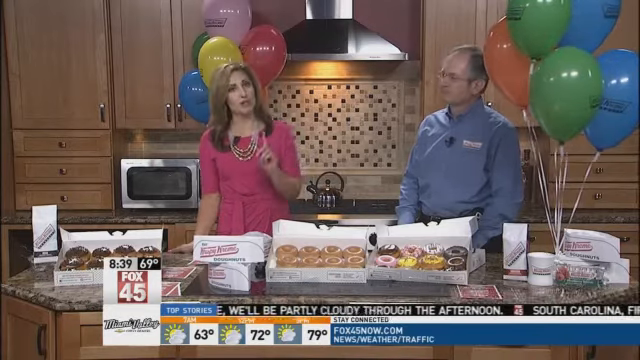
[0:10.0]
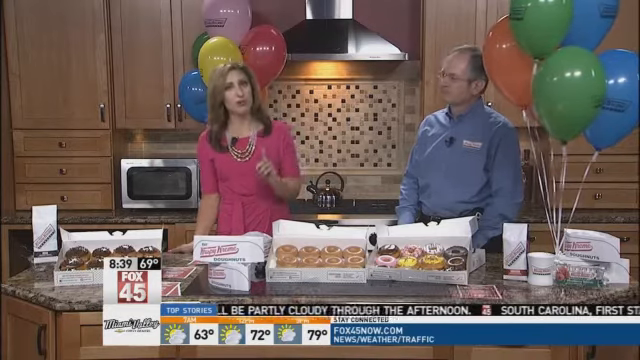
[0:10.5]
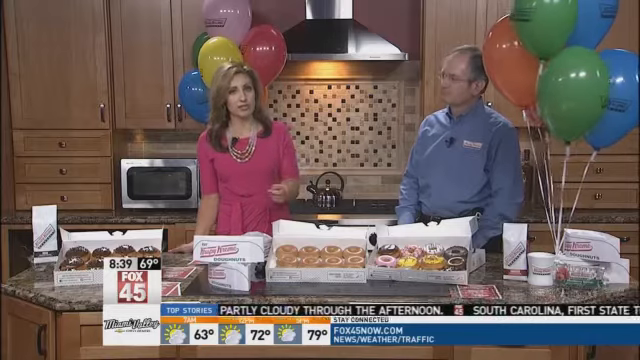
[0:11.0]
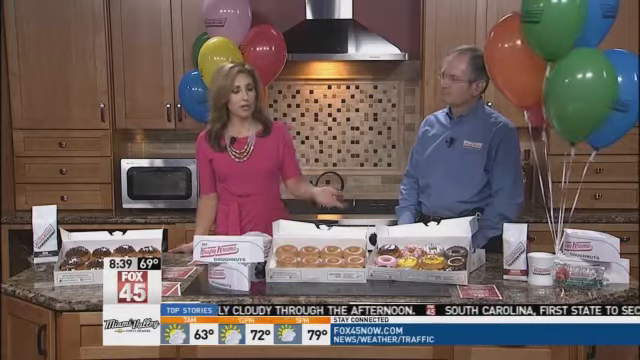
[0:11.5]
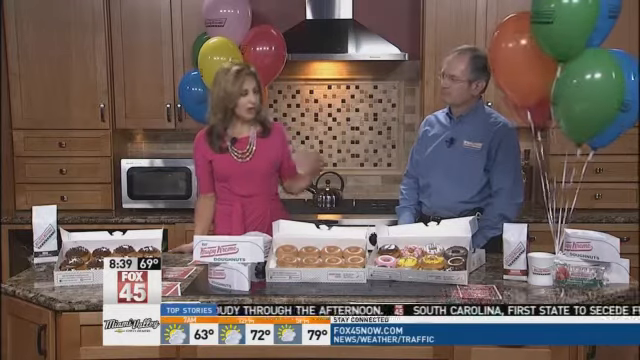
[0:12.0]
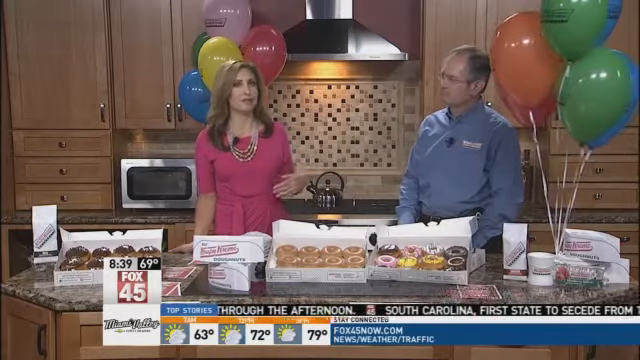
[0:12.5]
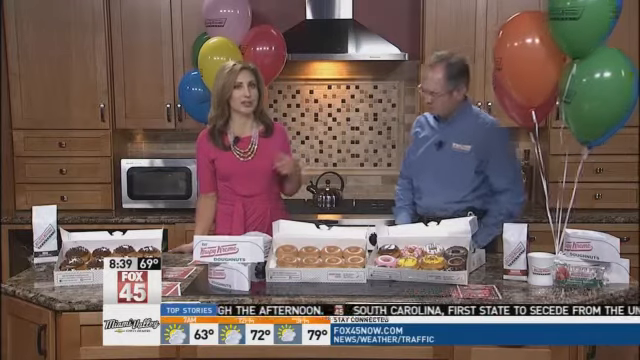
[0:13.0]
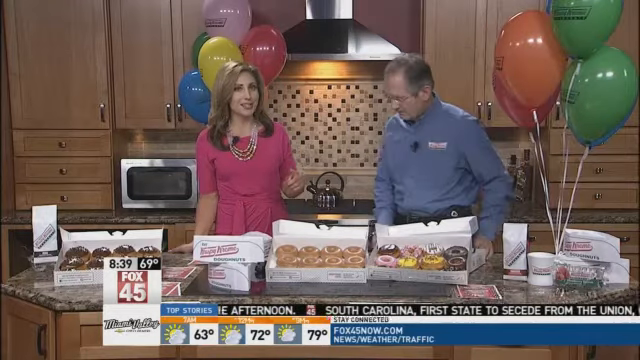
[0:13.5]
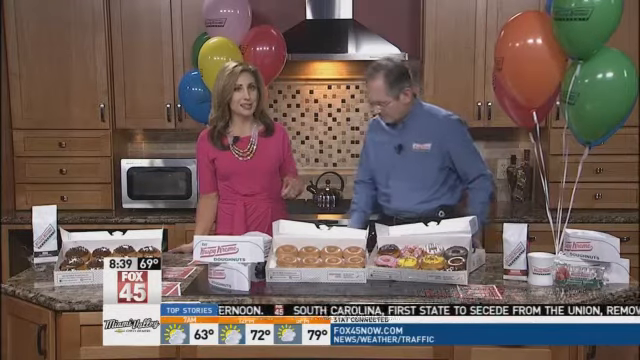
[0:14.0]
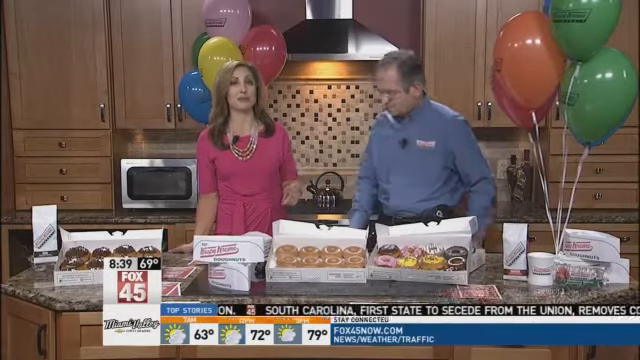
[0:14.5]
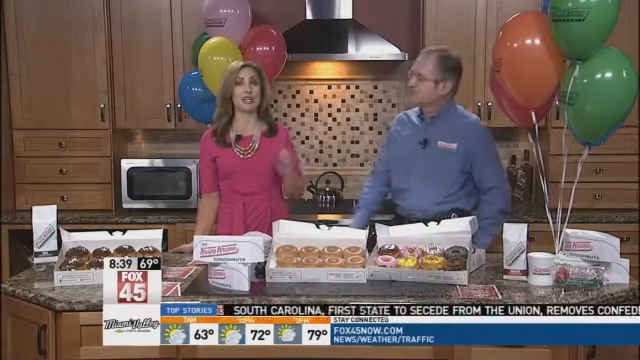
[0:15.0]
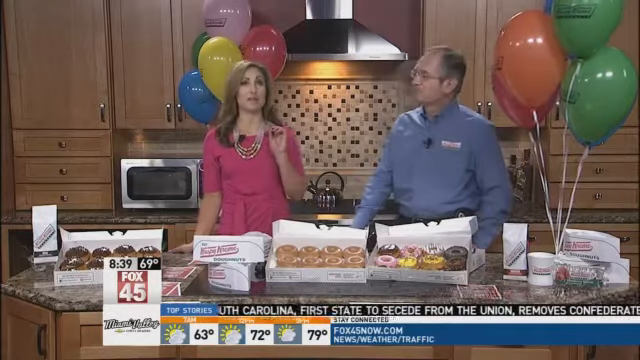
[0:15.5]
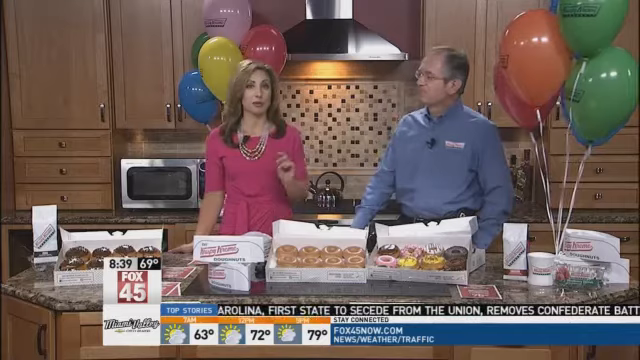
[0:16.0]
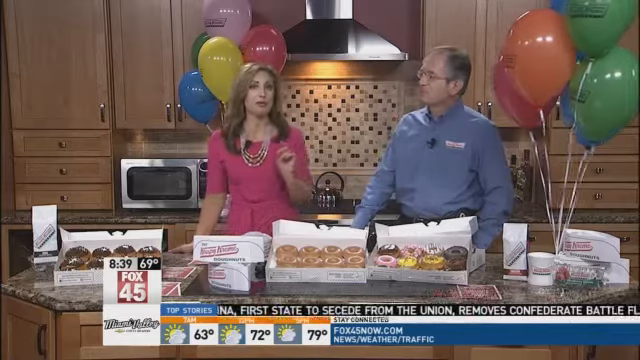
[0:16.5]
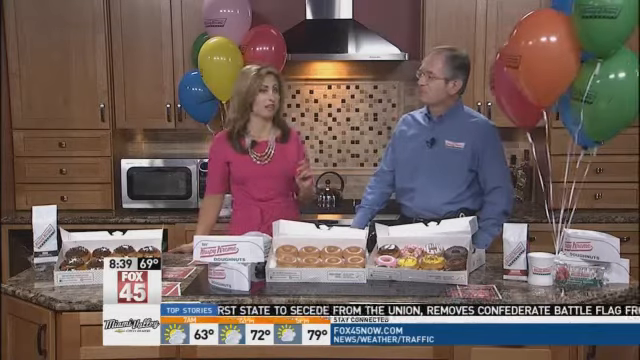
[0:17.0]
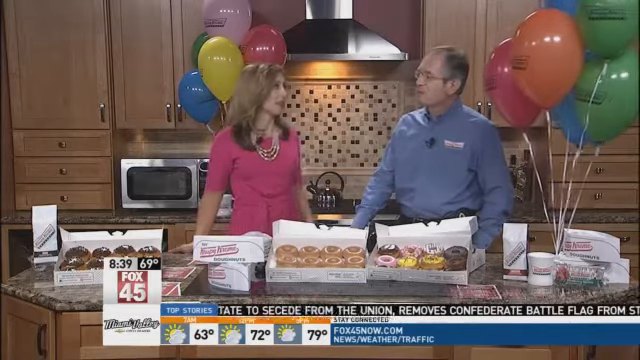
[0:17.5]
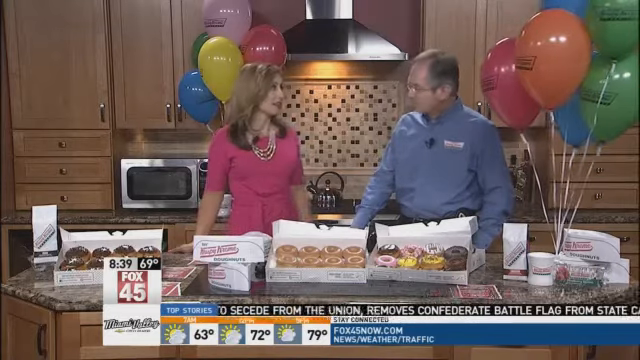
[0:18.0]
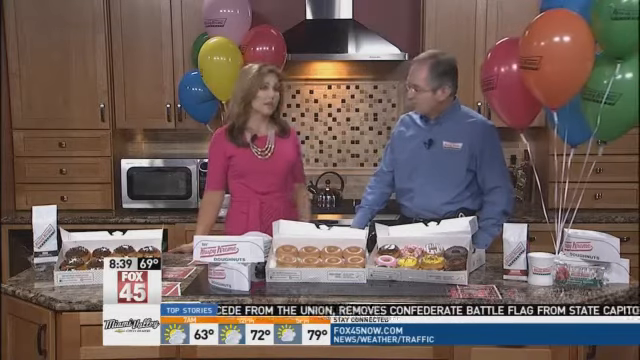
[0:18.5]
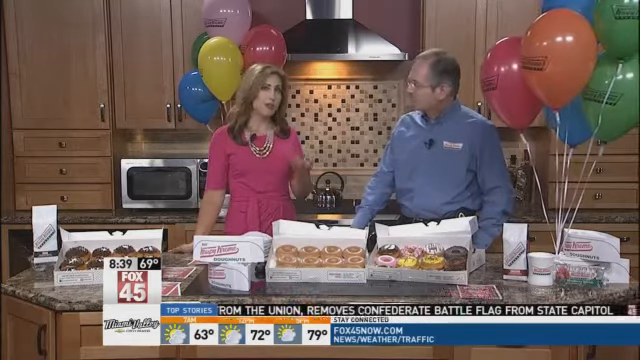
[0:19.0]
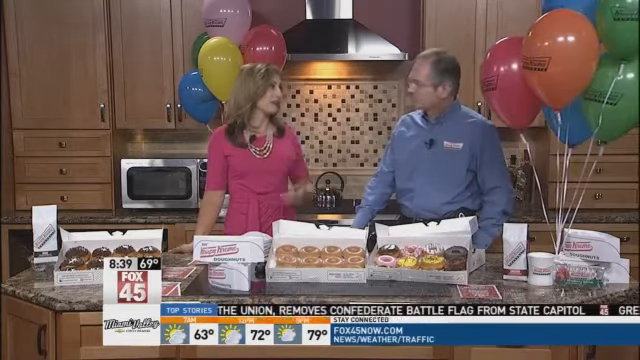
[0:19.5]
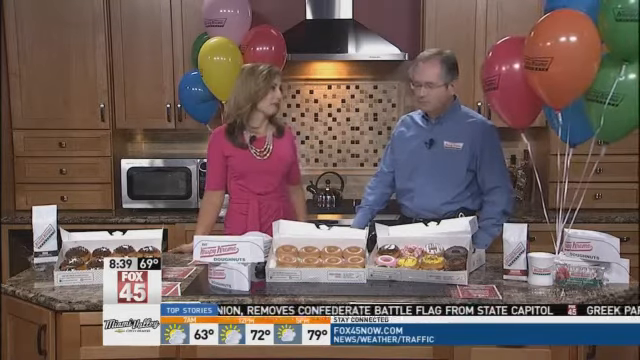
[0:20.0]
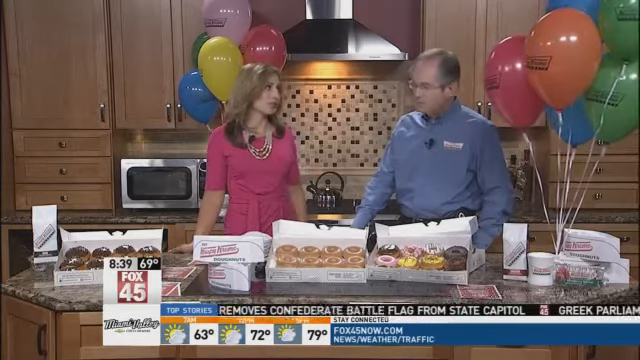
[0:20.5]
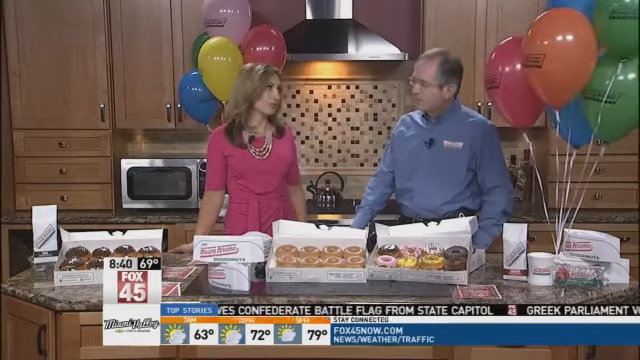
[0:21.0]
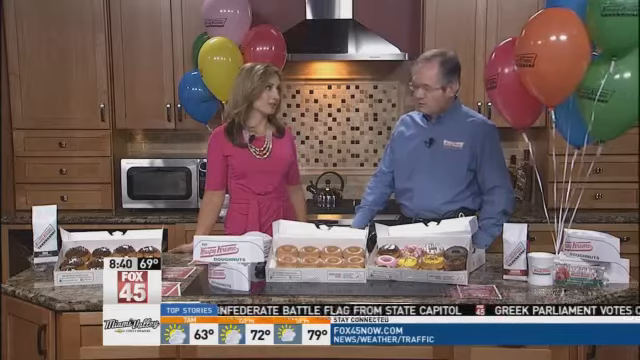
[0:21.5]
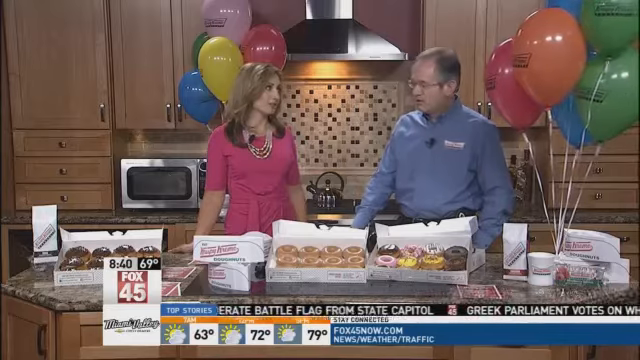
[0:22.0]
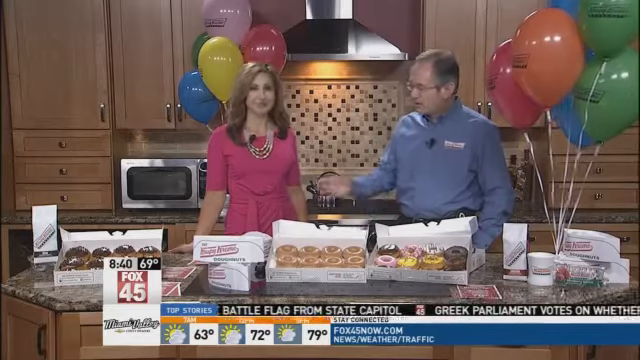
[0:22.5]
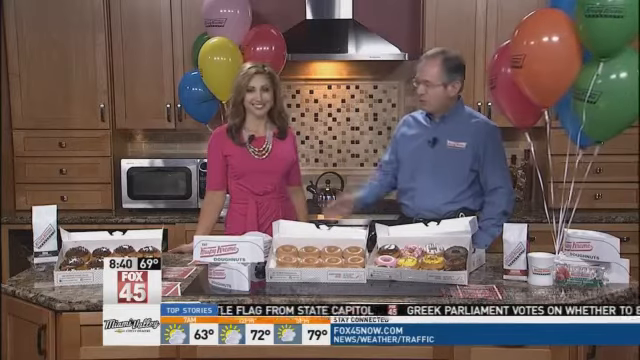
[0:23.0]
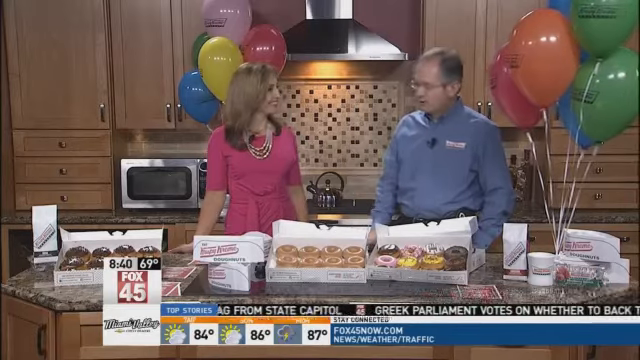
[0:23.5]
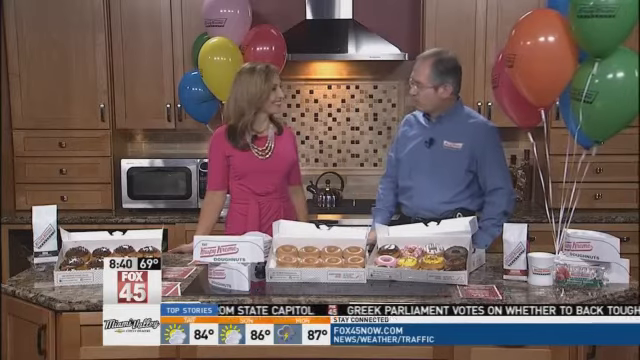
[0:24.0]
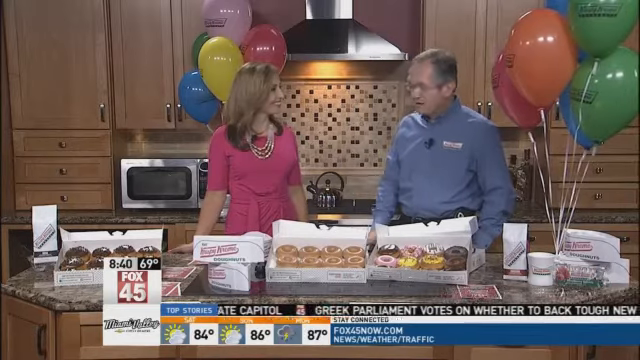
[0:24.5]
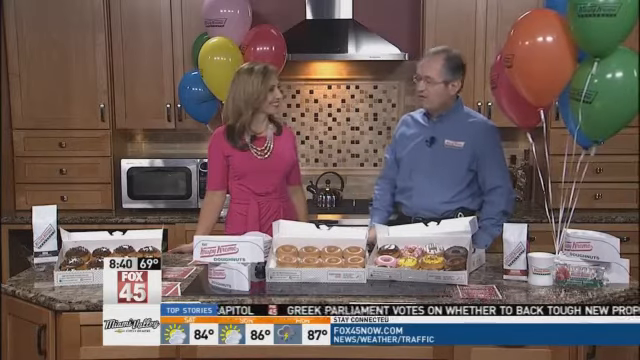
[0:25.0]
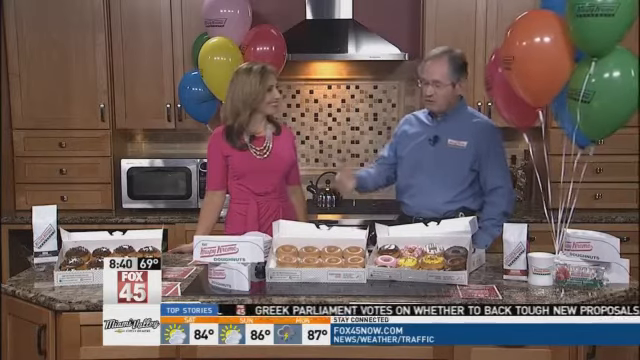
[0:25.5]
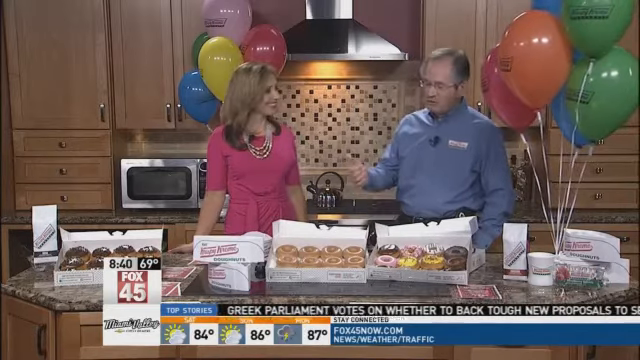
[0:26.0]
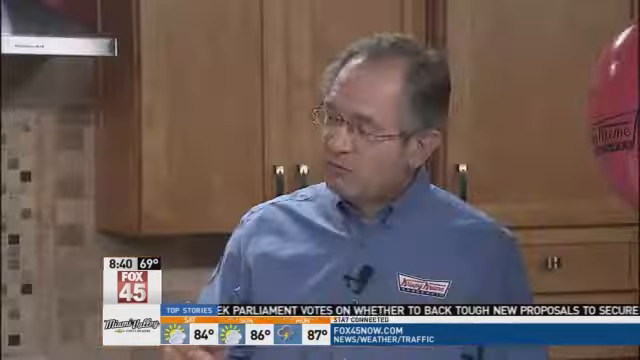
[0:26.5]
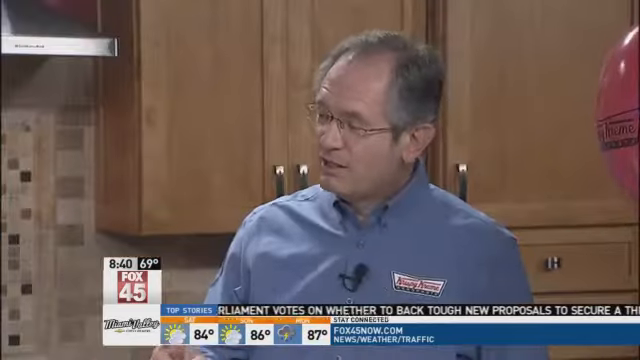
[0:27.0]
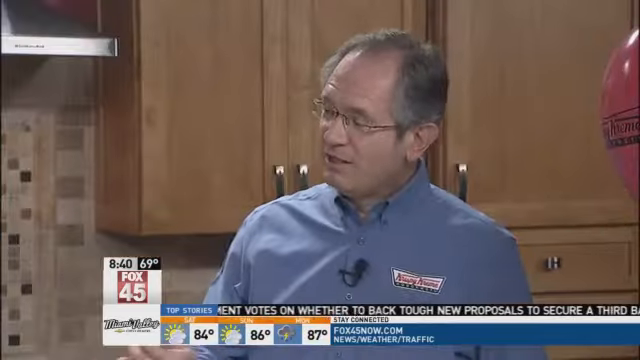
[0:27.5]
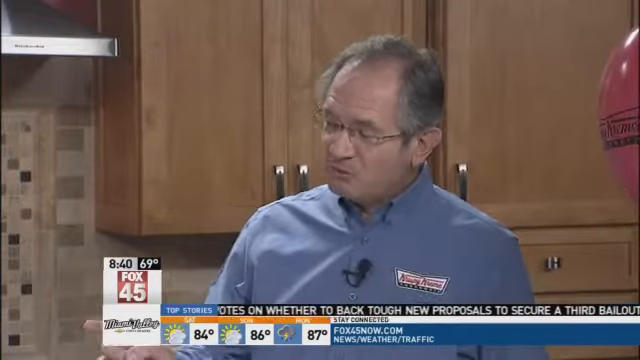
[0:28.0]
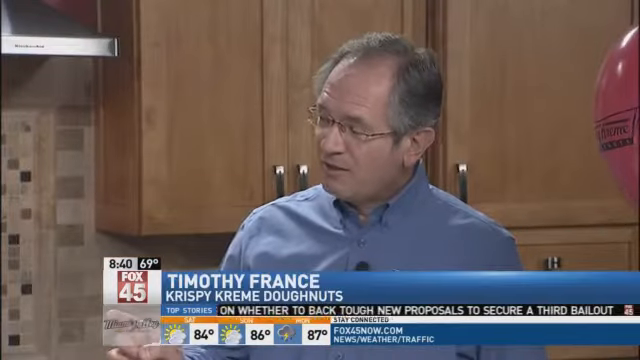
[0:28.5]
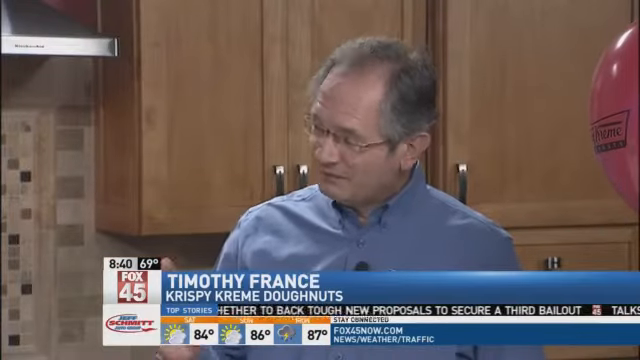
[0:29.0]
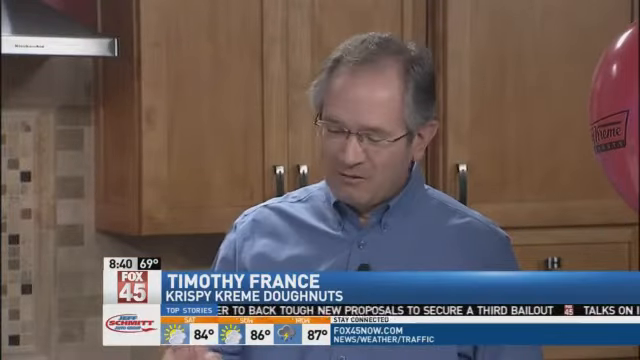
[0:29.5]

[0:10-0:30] The woman continues talking, holding up the pointer finger of her left hand and kind of shaking it at the camera for emphasis. She then gestures expansively with her left hand toward the man standing there. He nods a few times and kind of stands more at attention, then shifts his weight onto his back foot. She keeps talking, looks at him, then looks back at the camera with an arm out, as if inviting him into the discussion. While talking to him she nods, her eyebrows kind of supplicating as if showing empathy, and she gives a little smile, then a larger smile while looking down. The man then talks, looking down a lot, with his gestures also kind of going downward, which makes him look kind of introverted. The shot switches to a close-up of him, where Krispy Kreme appears on his lapel, and on-screen text gives his name as Timothy France.